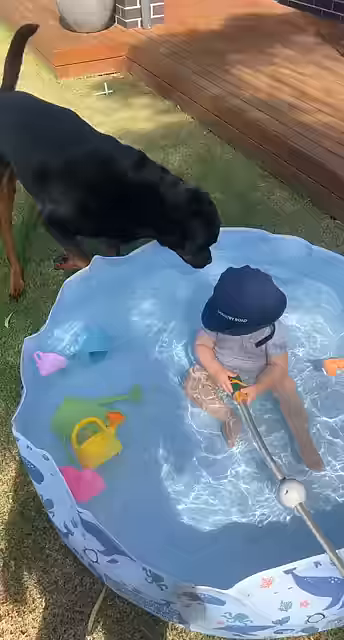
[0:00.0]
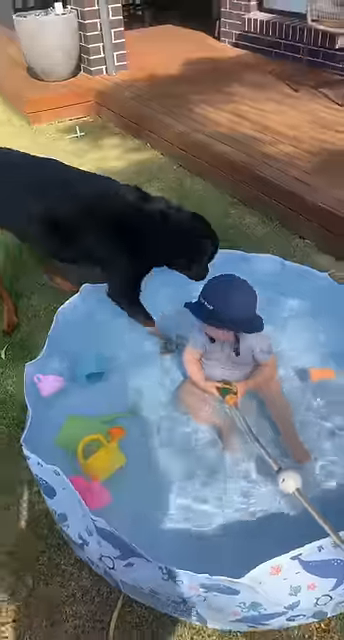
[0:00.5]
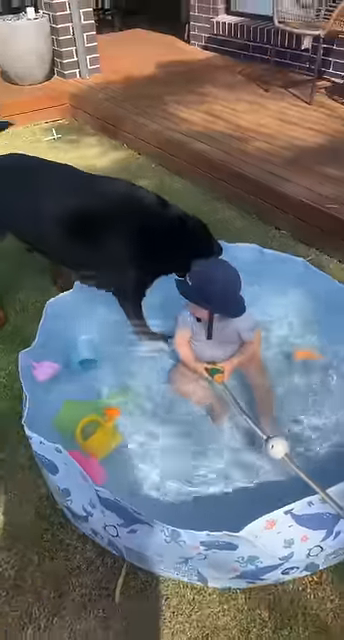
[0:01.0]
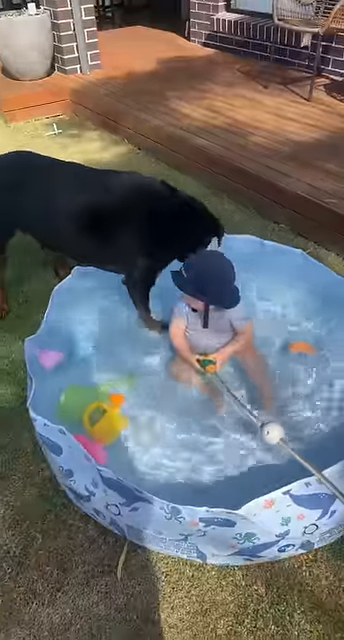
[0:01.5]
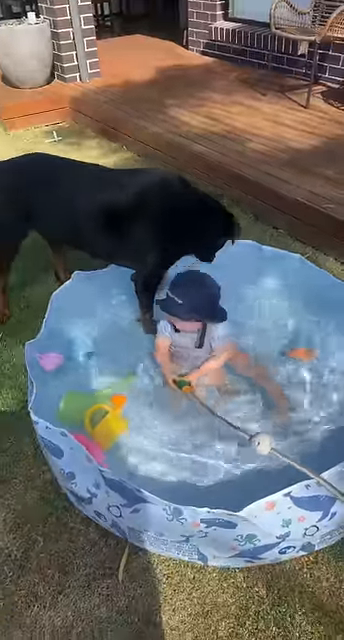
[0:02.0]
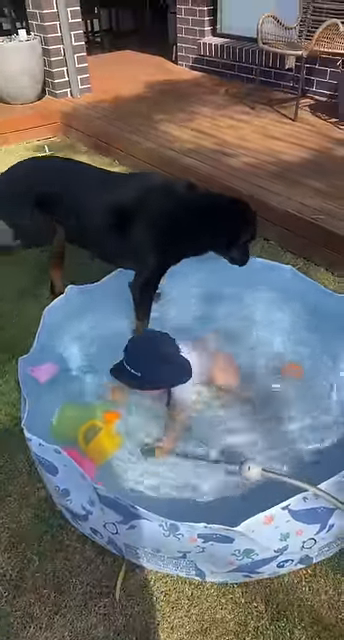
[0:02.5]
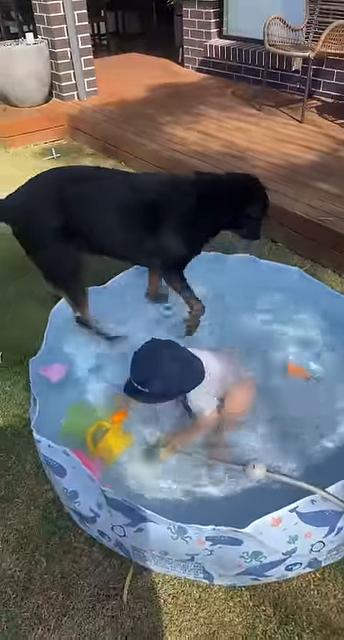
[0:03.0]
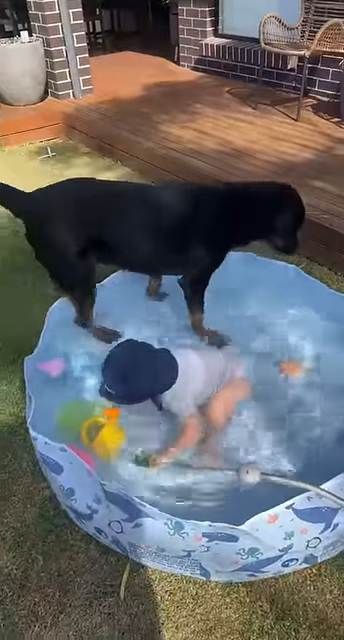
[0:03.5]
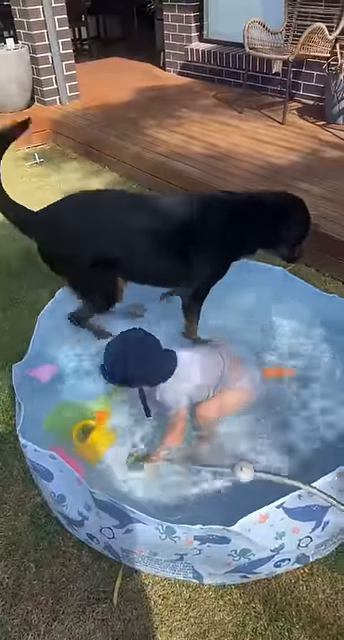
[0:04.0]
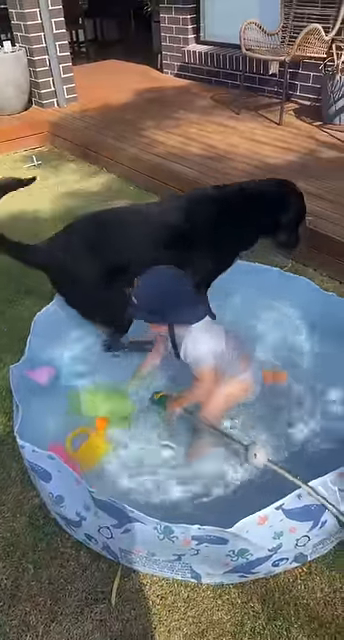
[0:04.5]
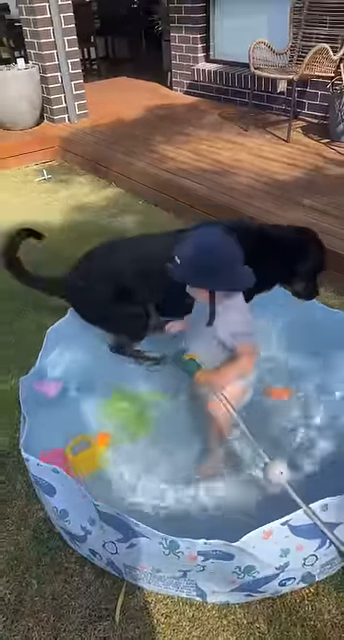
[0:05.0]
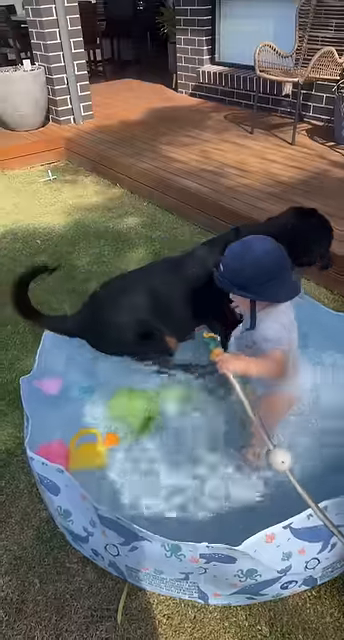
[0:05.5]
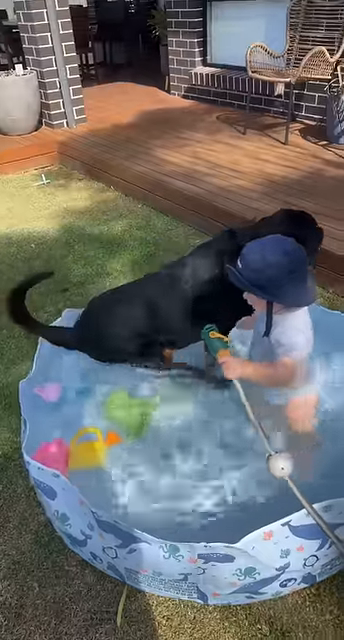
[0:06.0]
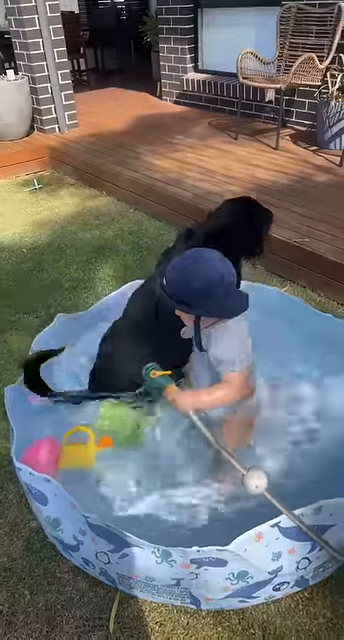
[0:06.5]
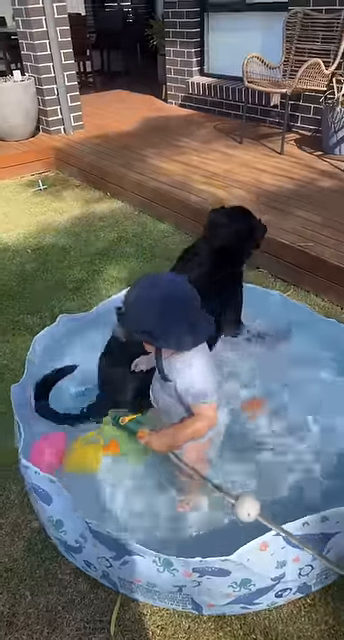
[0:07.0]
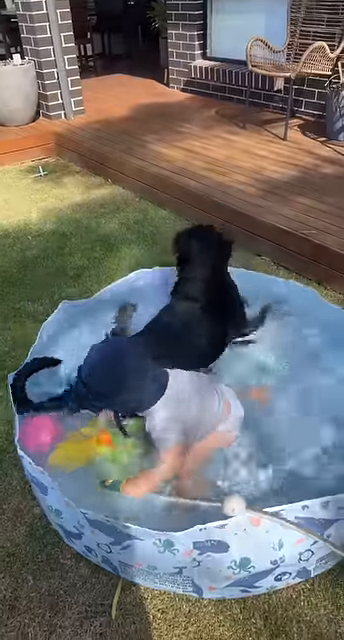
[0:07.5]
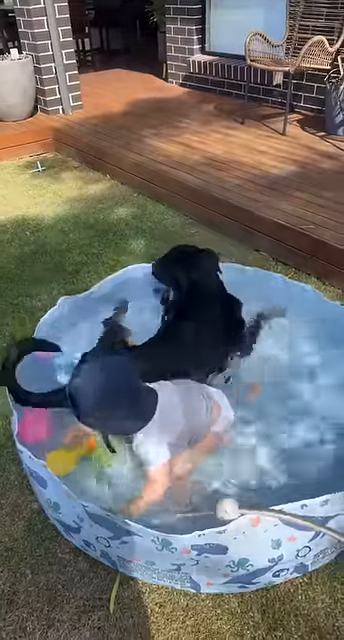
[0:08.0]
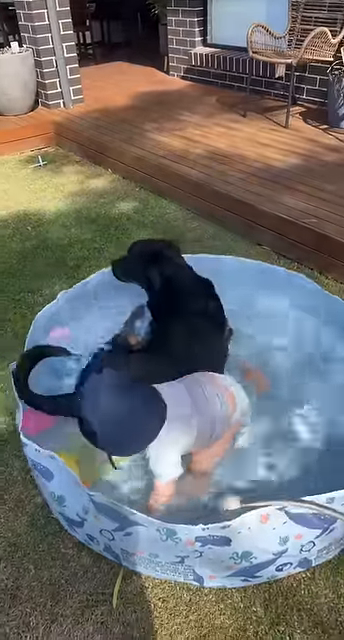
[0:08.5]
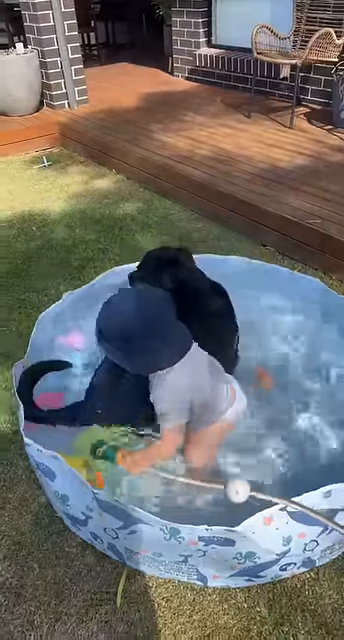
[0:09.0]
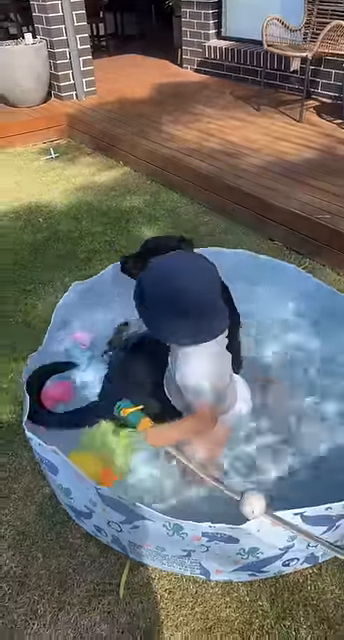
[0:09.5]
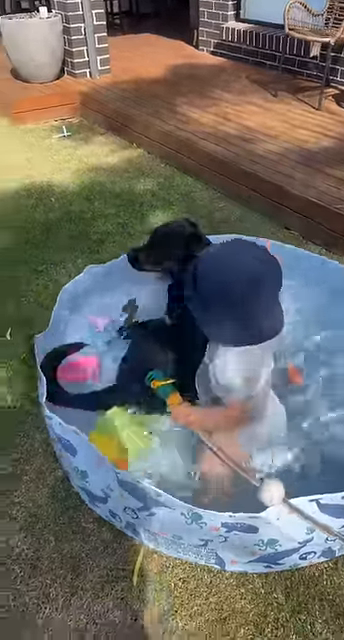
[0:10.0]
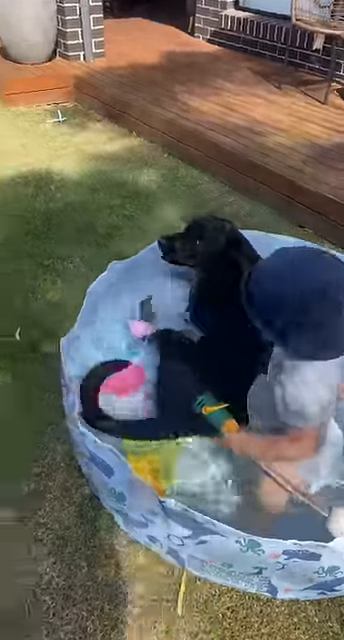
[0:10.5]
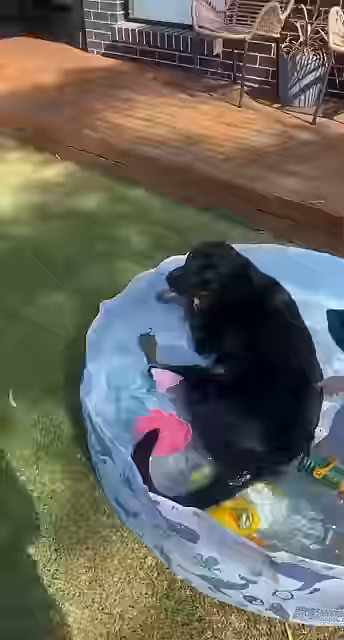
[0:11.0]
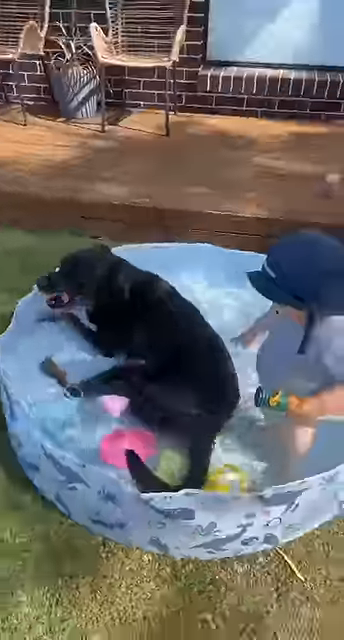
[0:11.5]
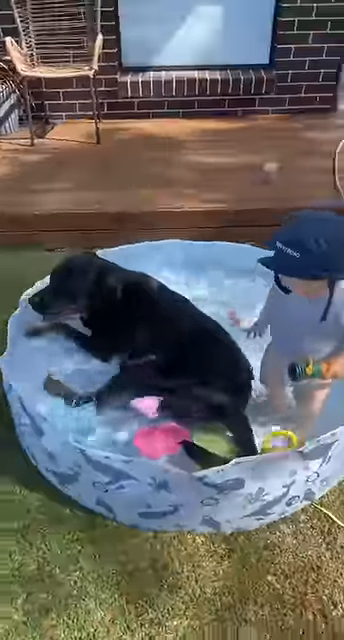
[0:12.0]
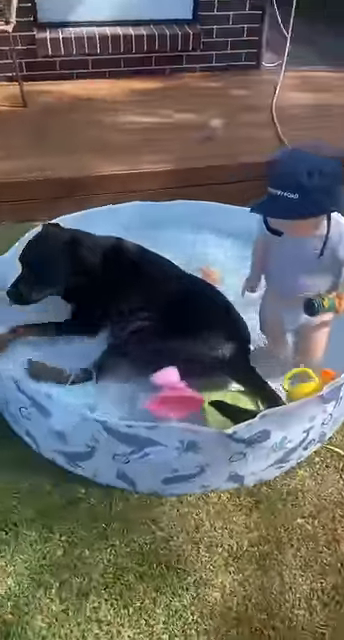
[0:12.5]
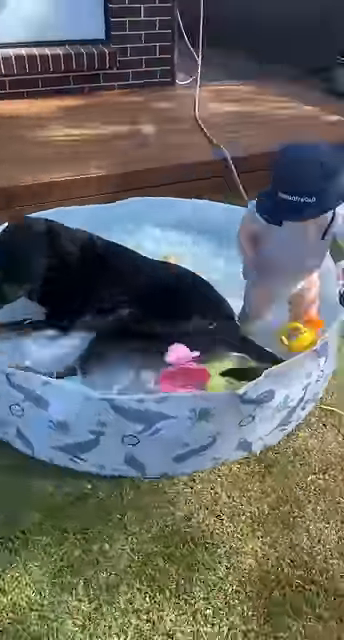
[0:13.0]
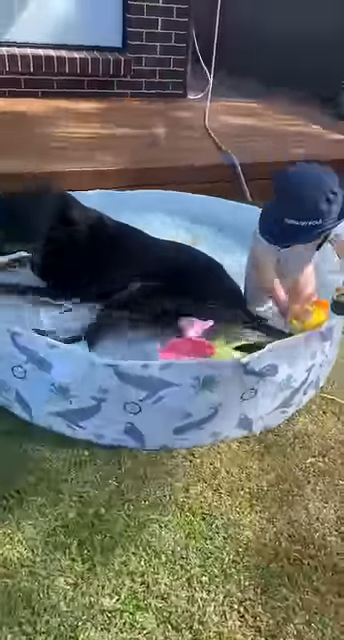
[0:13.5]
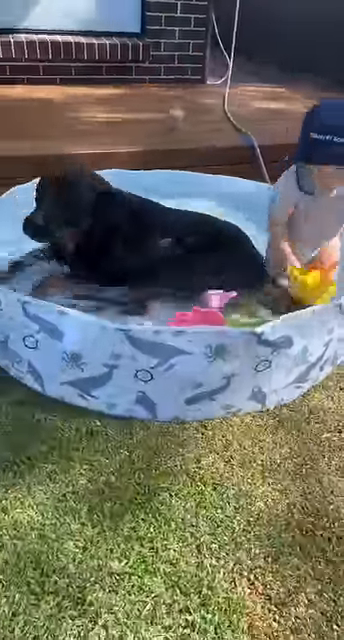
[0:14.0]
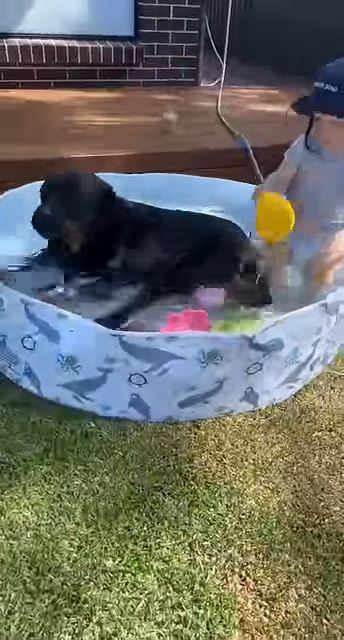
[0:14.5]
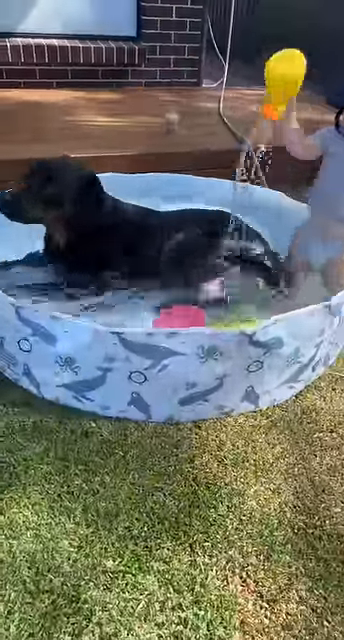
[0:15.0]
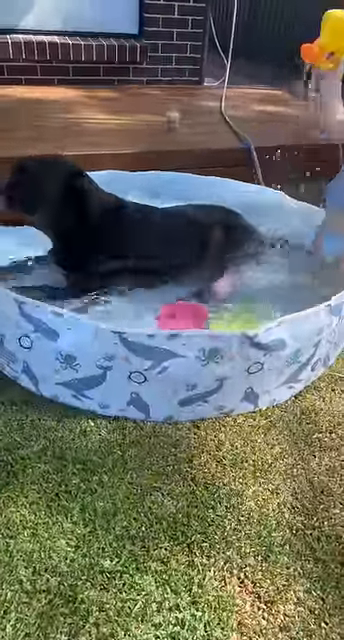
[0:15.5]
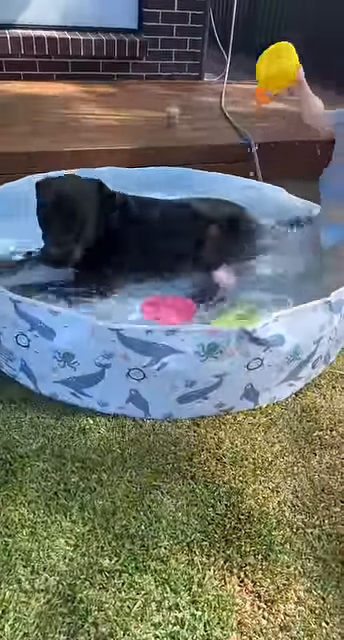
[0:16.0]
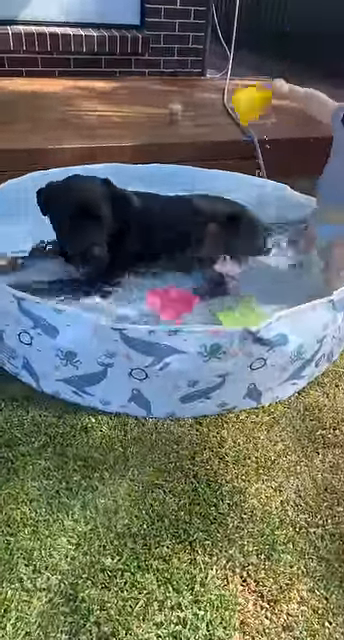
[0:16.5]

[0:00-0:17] What appears to be a wading pool, or a little kid's kiddie pool, is set on the lawn in somebody's backyard. It is full of water and toys, and there are little blue whales on its sides. A baby sits in the middle of the pool wearing a little blue fisherman's hat or outdoor hat. A big black Rottweiler, which looks kind of old, comes into the scene; he is slow moving but very big. He moseys right into the pool next to the baby and lies down in the water with the child. The baby kind of stands up, and the two of them are in the pool together: the baby is kind of standing there holding the hose while the dog lies there very comfortably.